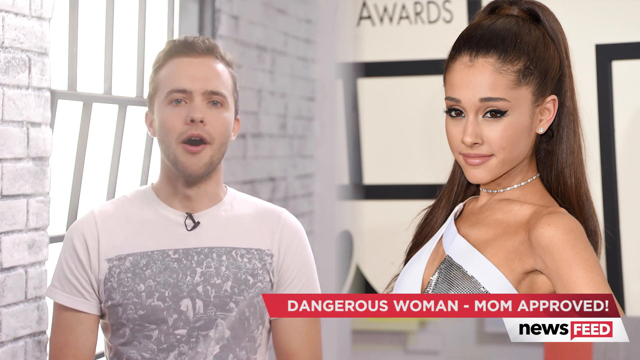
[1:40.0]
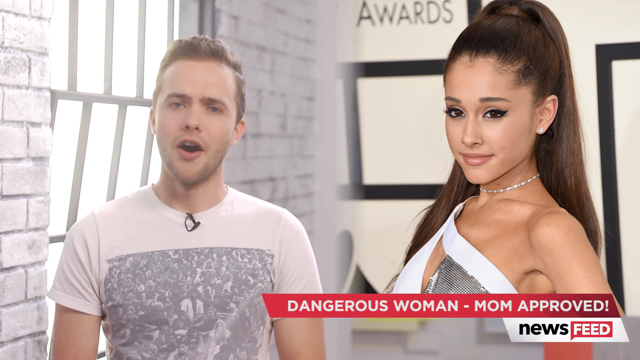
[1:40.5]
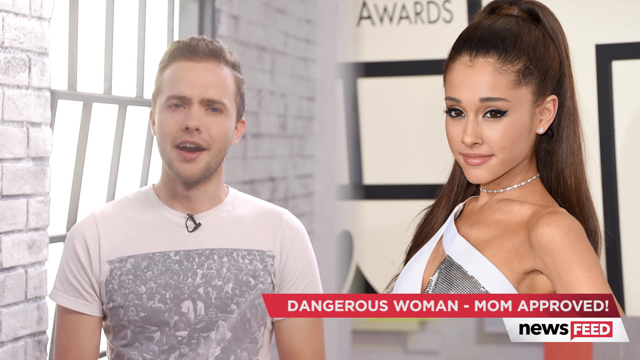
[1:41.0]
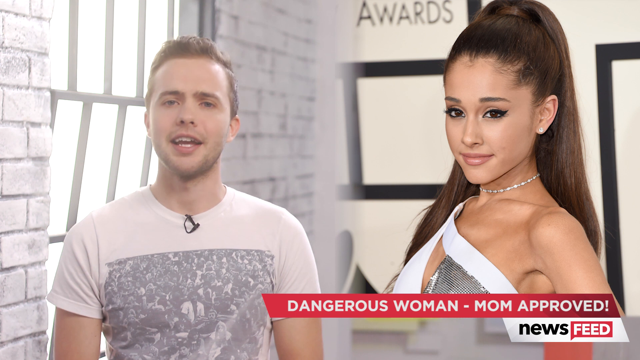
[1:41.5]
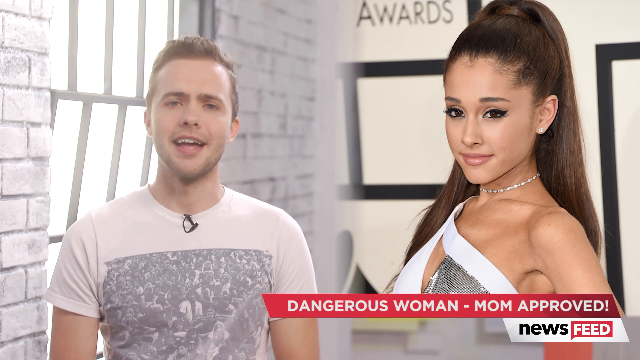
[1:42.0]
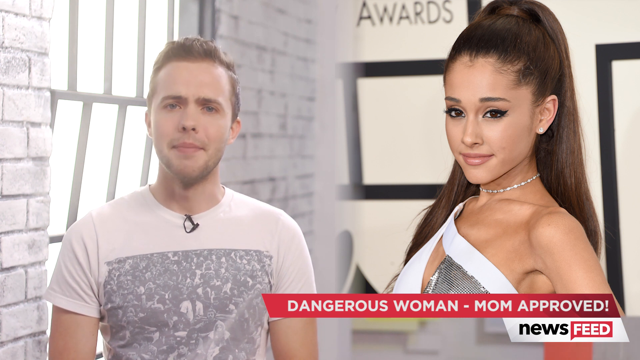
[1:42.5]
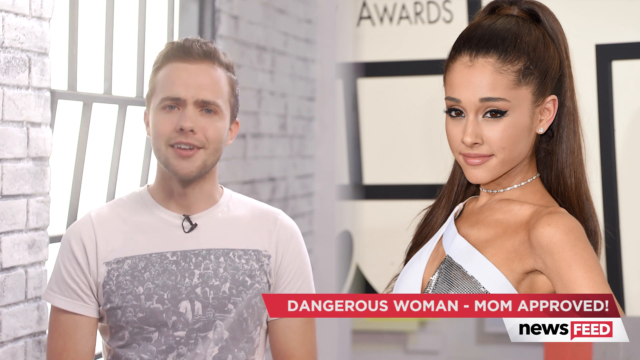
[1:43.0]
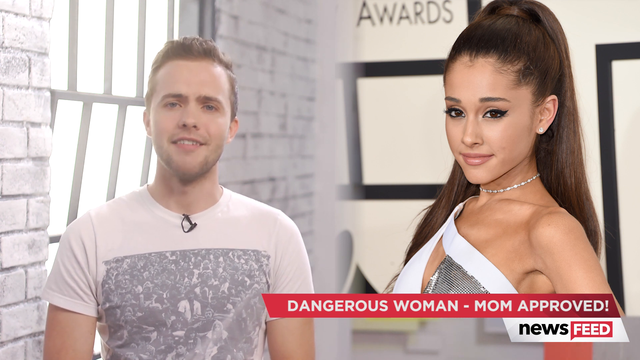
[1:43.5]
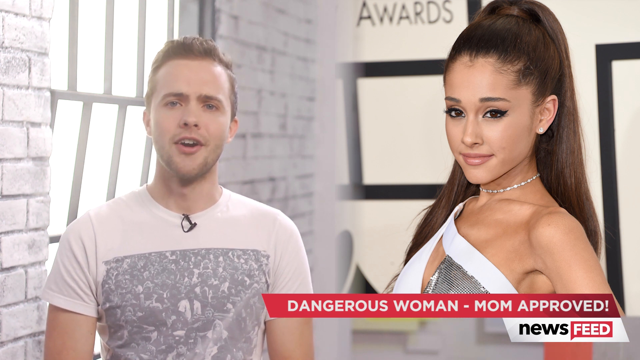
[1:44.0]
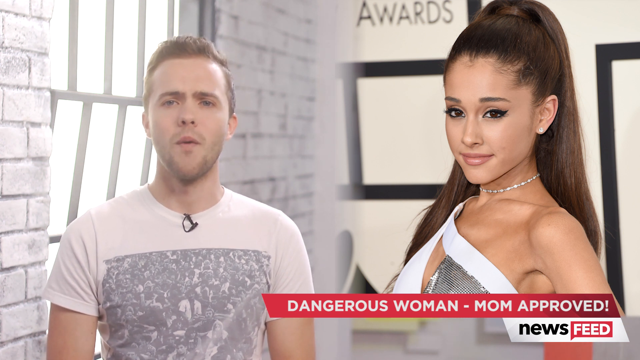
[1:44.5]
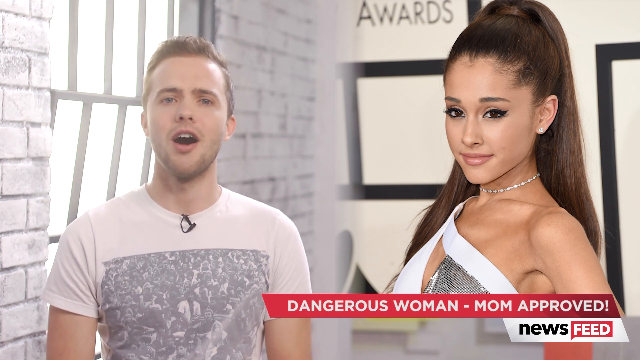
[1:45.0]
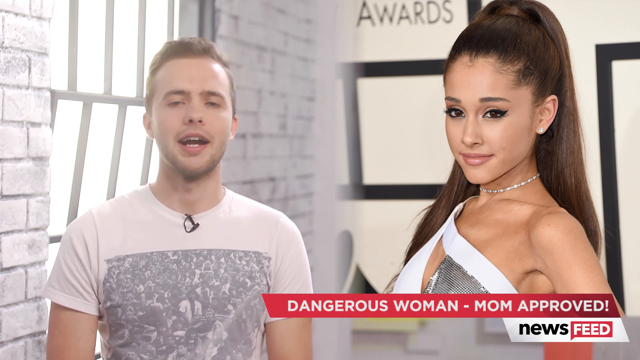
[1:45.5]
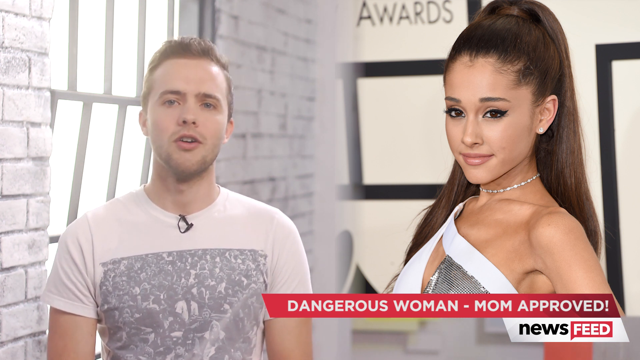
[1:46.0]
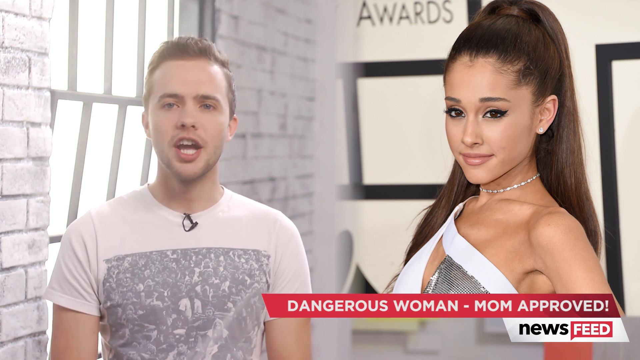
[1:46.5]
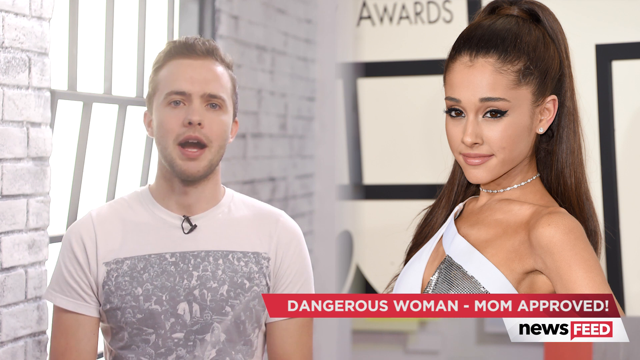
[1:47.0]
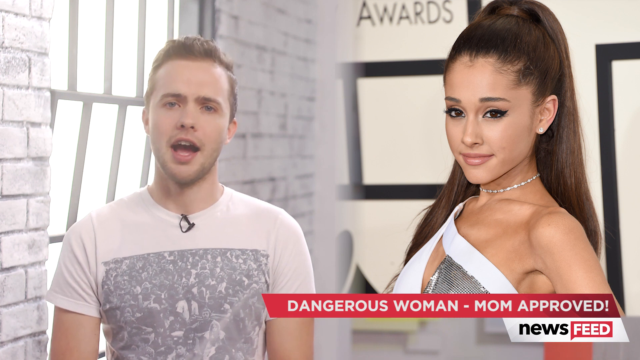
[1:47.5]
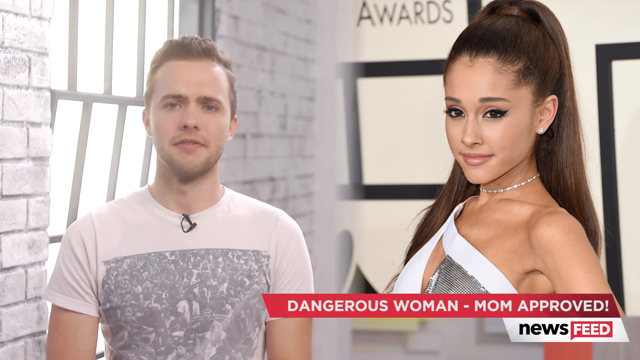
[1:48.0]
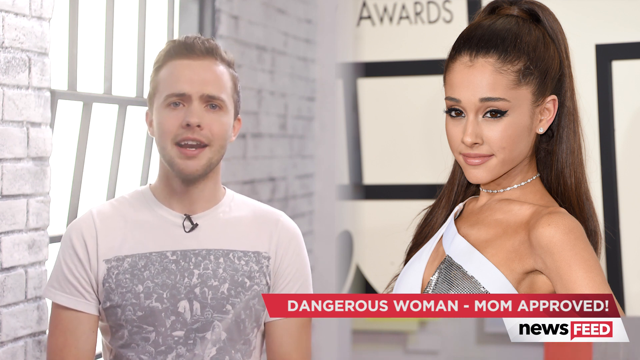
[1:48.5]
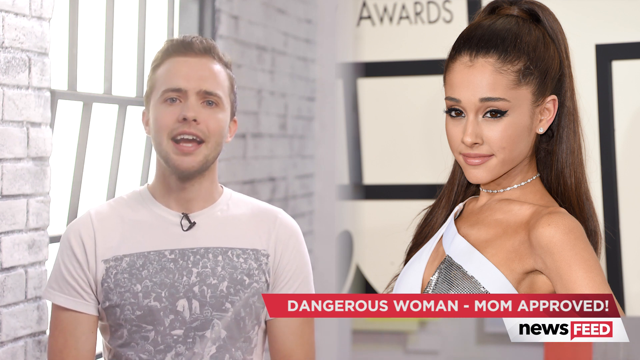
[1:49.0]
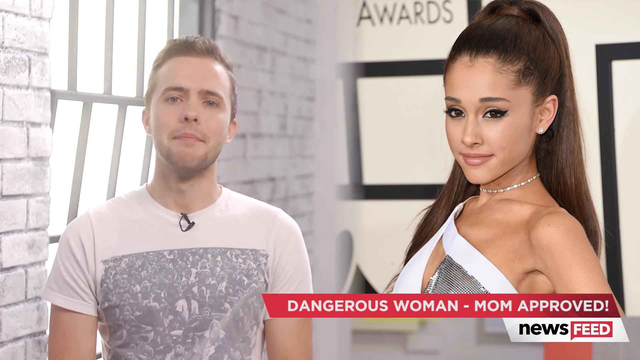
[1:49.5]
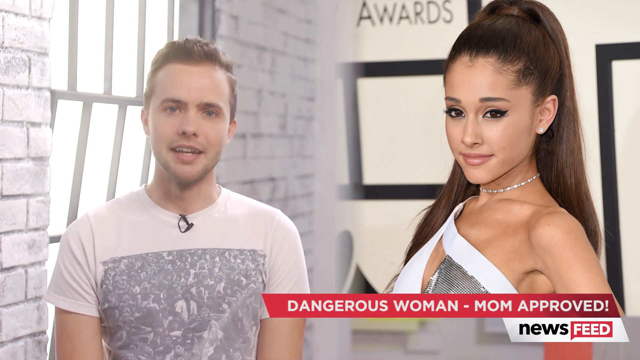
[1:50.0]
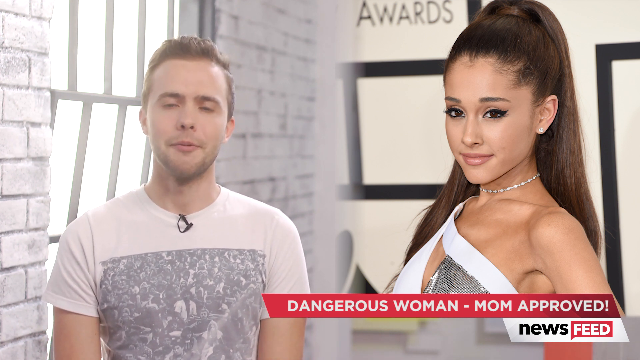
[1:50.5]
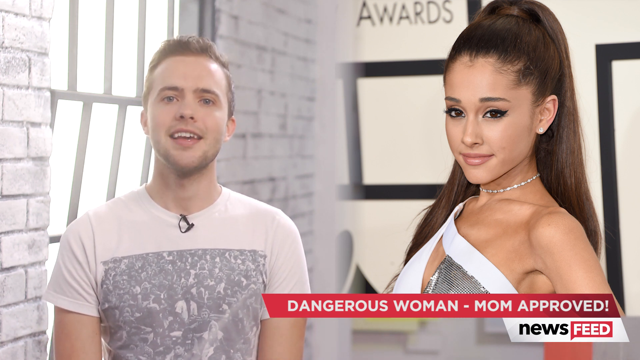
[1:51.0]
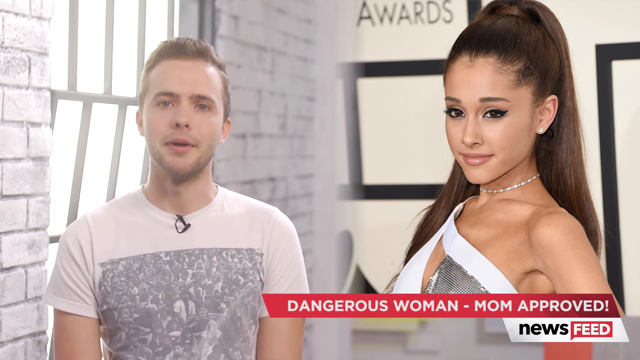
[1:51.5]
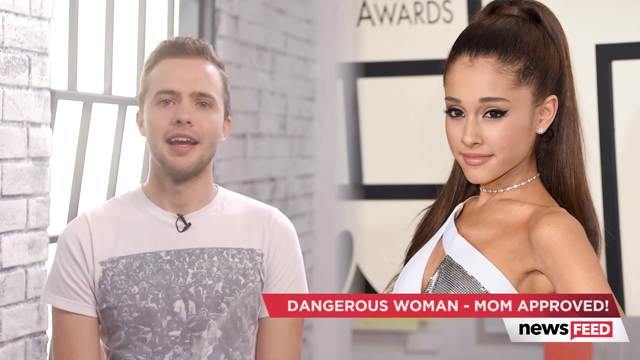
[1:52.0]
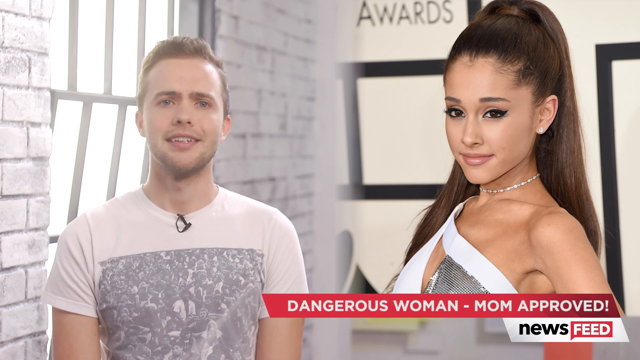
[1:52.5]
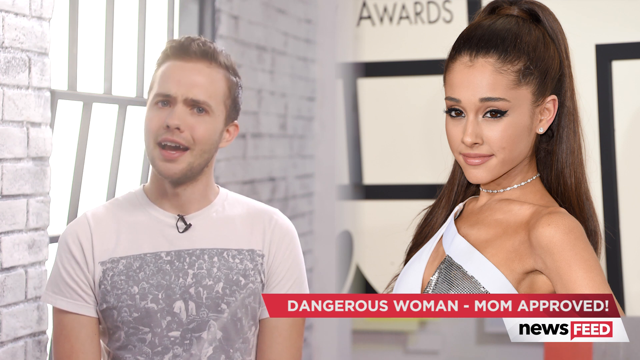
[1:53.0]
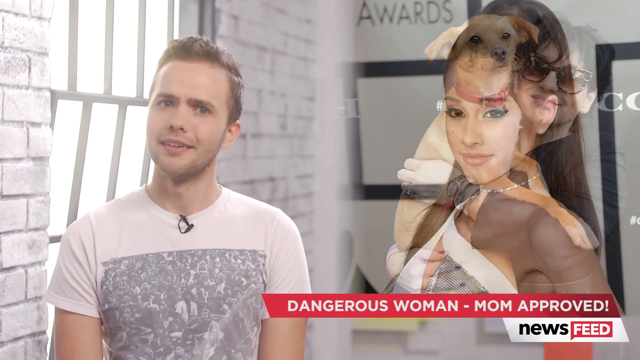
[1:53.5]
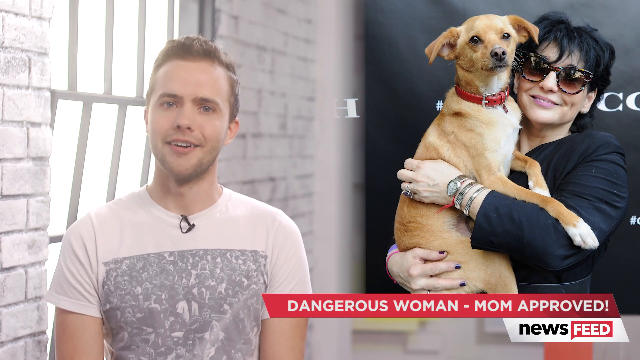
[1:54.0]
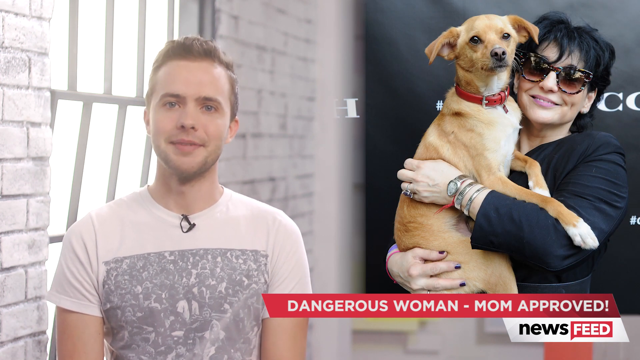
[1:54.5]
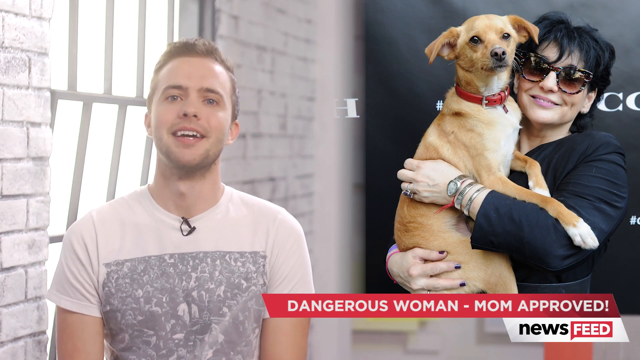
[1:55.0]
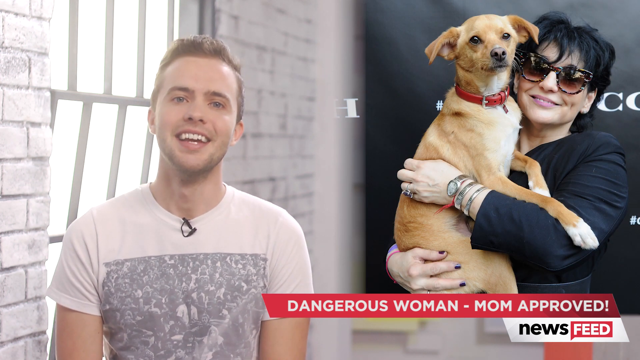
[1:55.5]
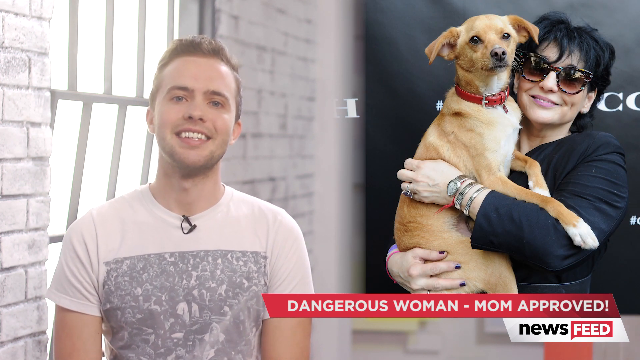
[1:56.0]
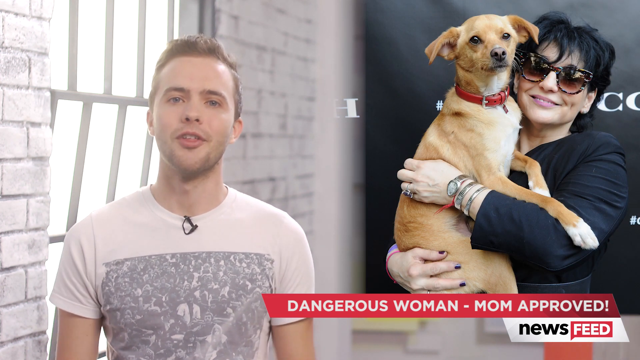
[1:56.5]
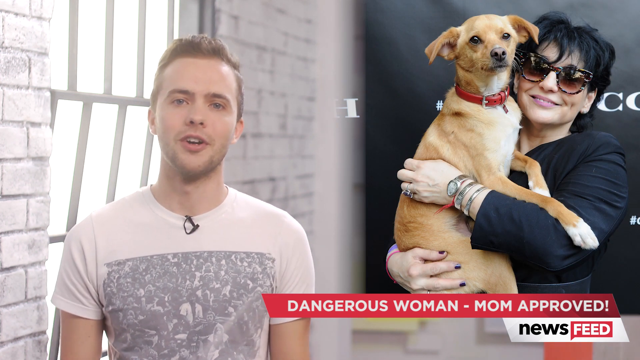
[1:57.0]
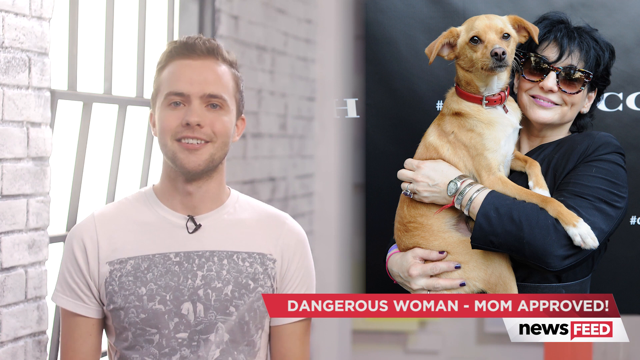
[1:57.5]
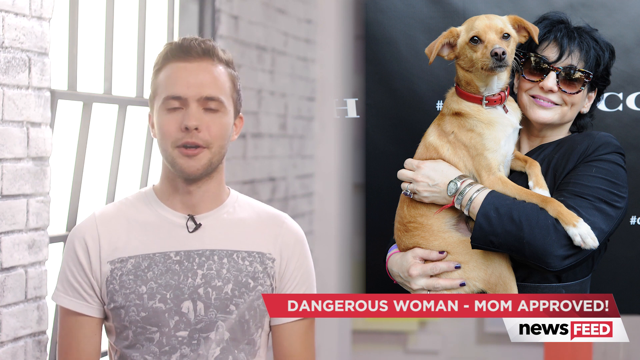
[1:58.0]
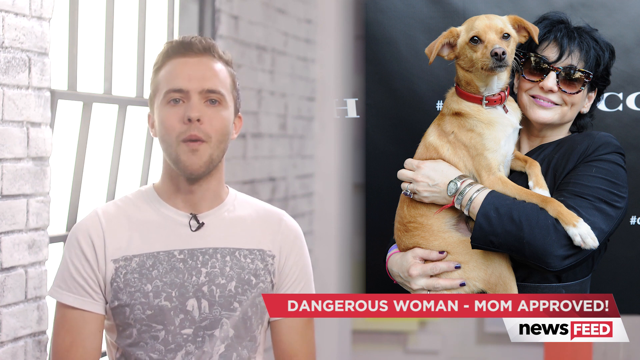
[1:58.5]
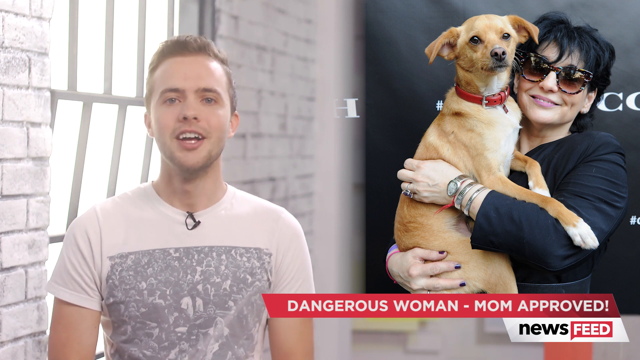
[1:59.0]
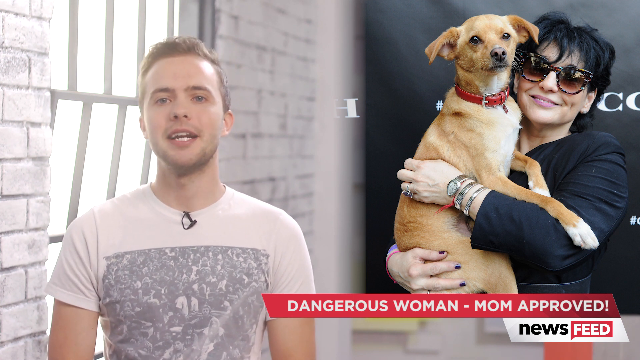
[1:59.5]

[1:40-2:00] A young man, in what looks like his own home used as a studio for the show he hosts, stands in front of the camera. He looks fresh-faced and quite youthful, wearing a white t-shirt with a small microphone clipped to it. As he smiles and talks, a screen to his right shows an image of Ariana Grande singing with a microphone, a choker necklace around her neck and her hair pulled back. Below her image it reads "dangerous women, mom approved", and the News Feed logo is in the lower right corner. The man keeps speaking with many facial expressions, and the video then moves to a shot of a woman who is perhaps Ariana's mother, holding a dog. She stands facing forward, wearing dark sunglasses and a dark jacket, with short dark hair. The dog she holds is golden-colored and mid-size, with floppy ears.